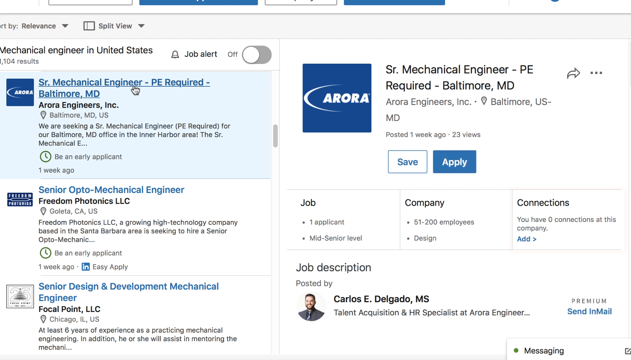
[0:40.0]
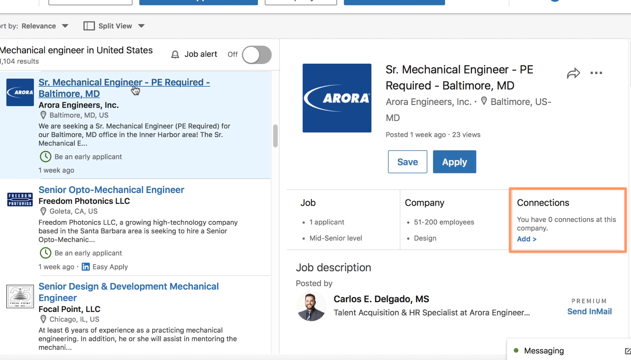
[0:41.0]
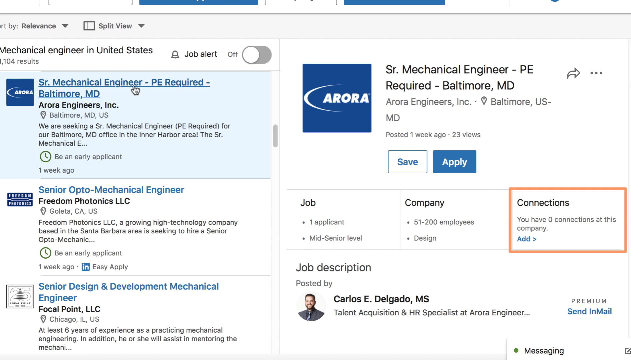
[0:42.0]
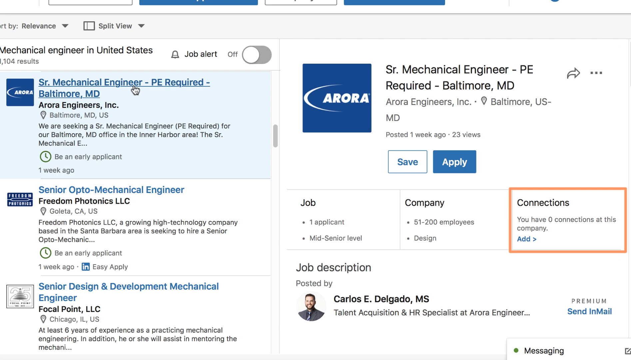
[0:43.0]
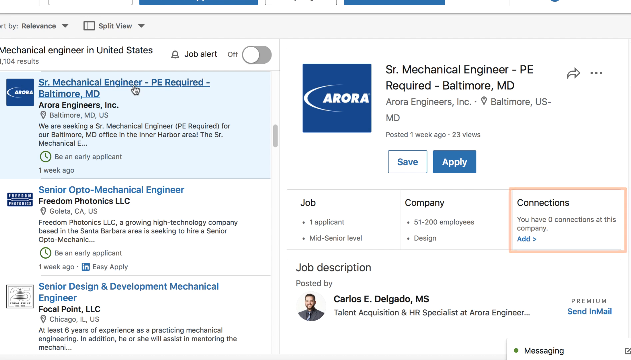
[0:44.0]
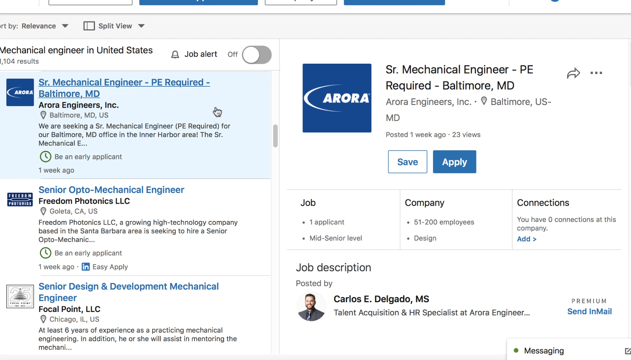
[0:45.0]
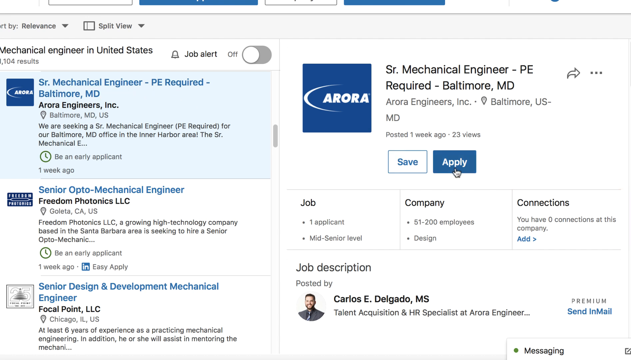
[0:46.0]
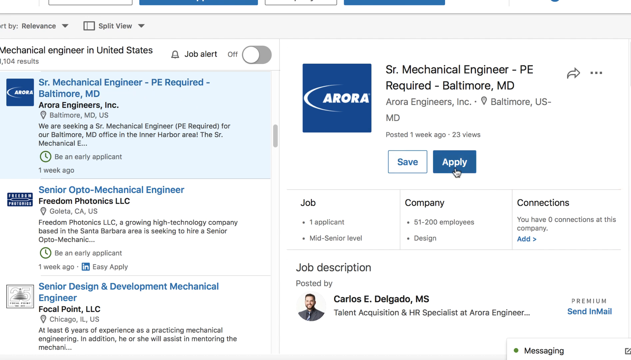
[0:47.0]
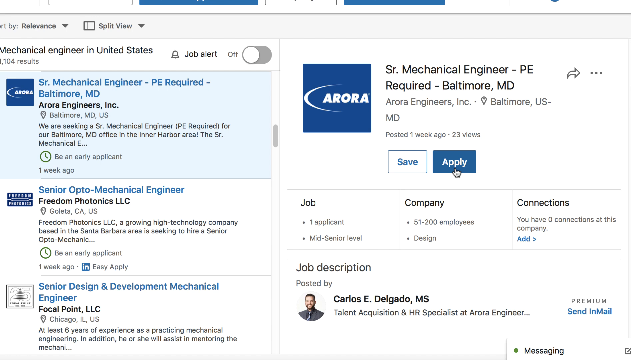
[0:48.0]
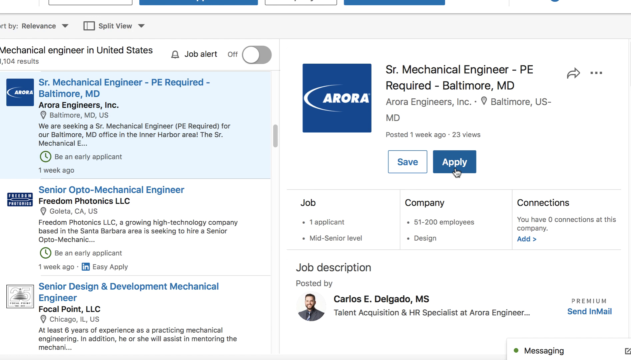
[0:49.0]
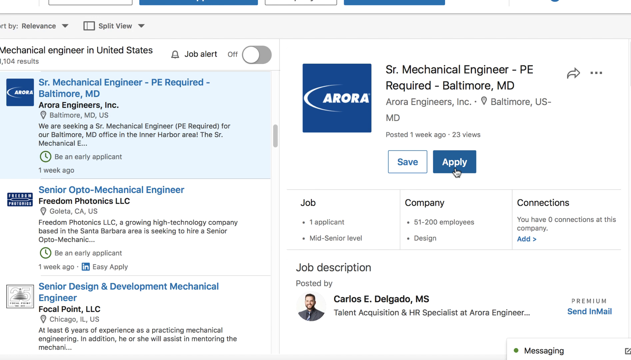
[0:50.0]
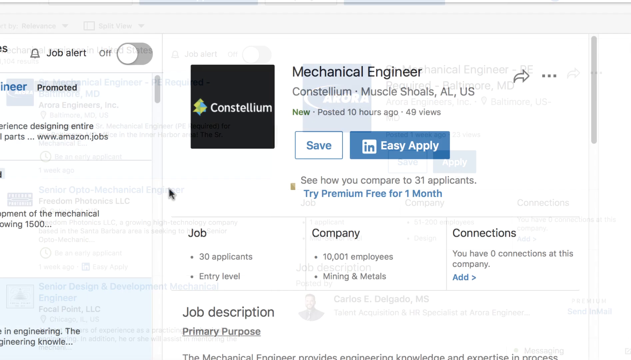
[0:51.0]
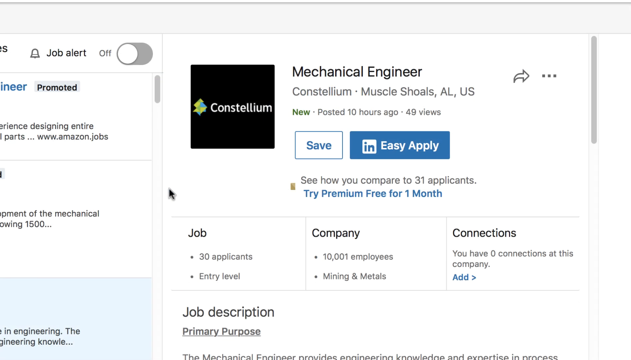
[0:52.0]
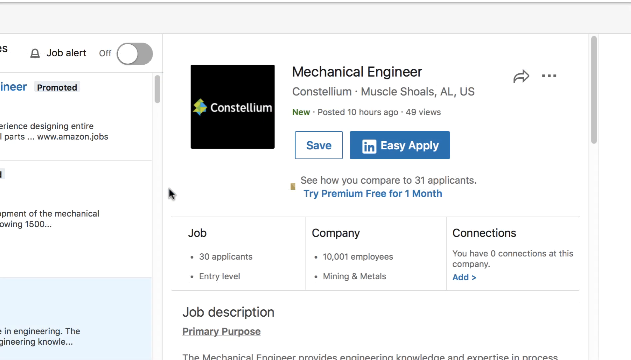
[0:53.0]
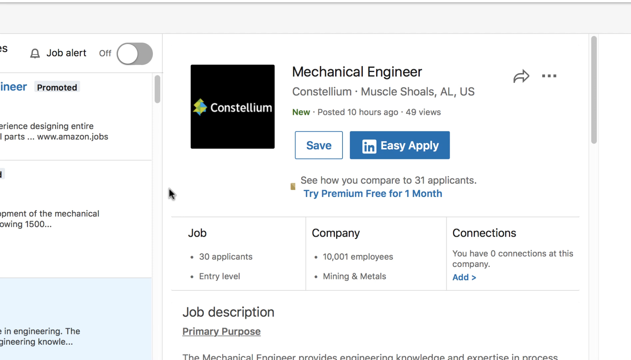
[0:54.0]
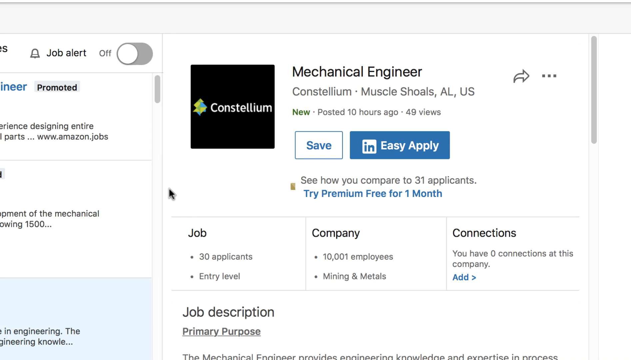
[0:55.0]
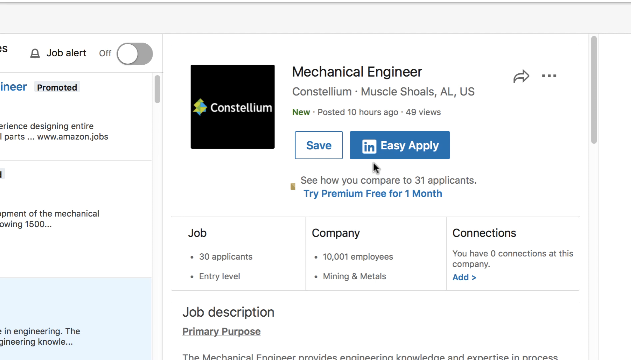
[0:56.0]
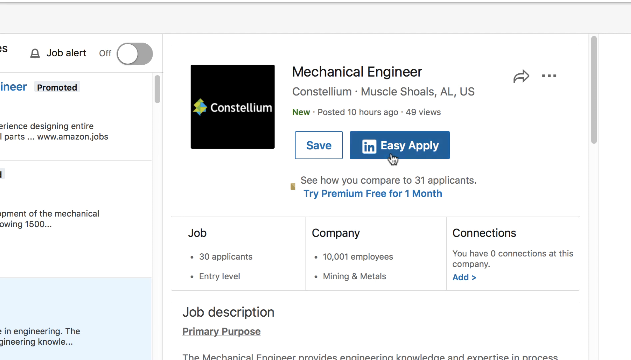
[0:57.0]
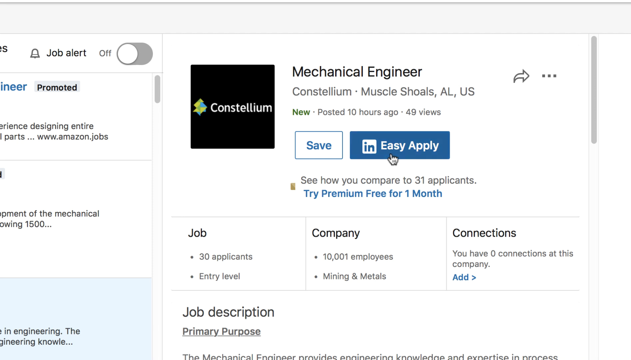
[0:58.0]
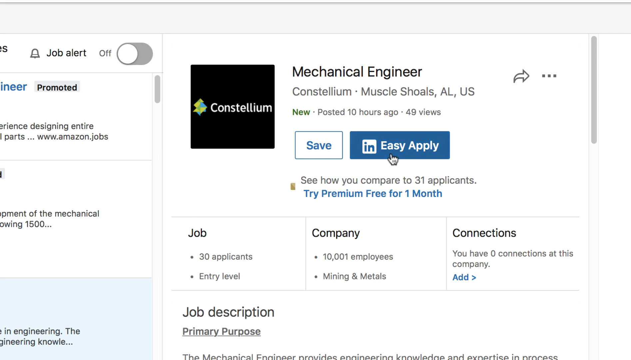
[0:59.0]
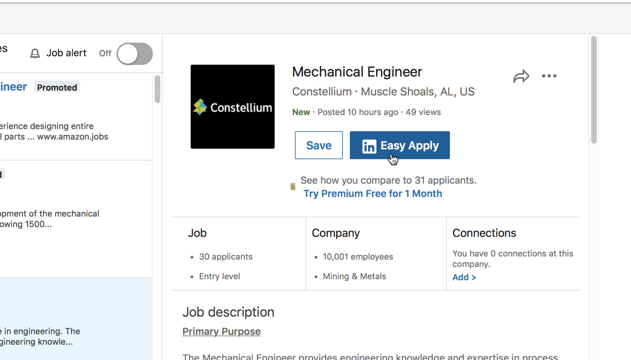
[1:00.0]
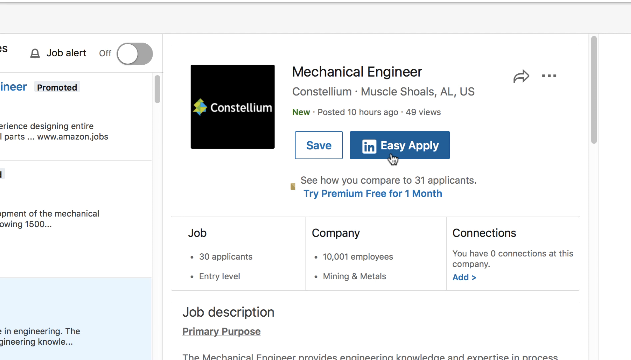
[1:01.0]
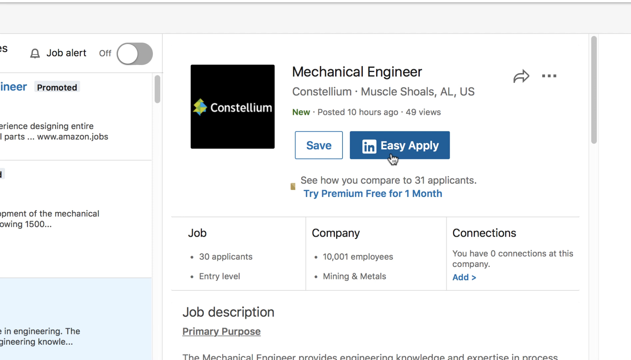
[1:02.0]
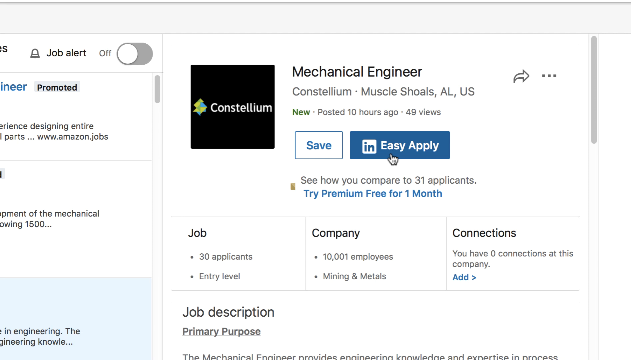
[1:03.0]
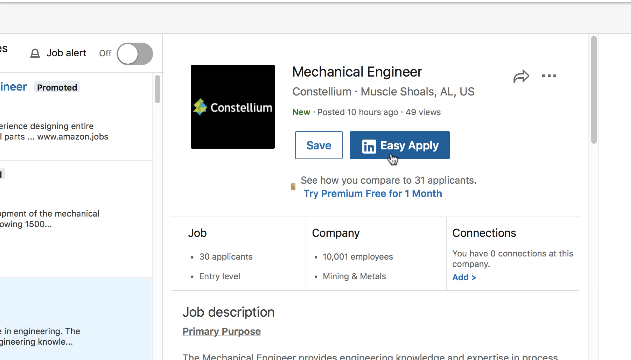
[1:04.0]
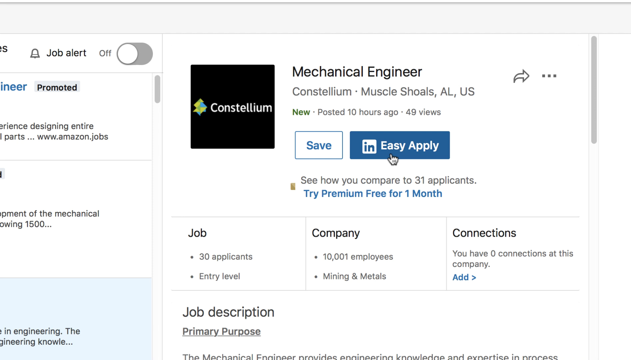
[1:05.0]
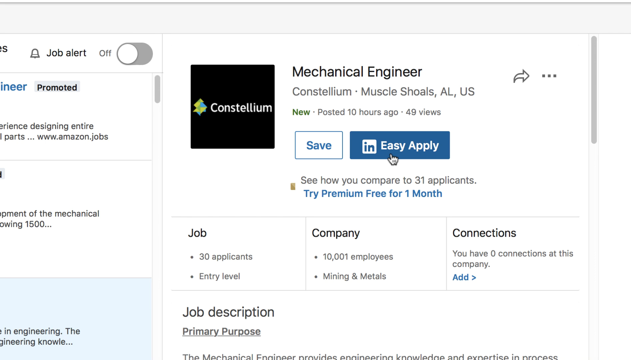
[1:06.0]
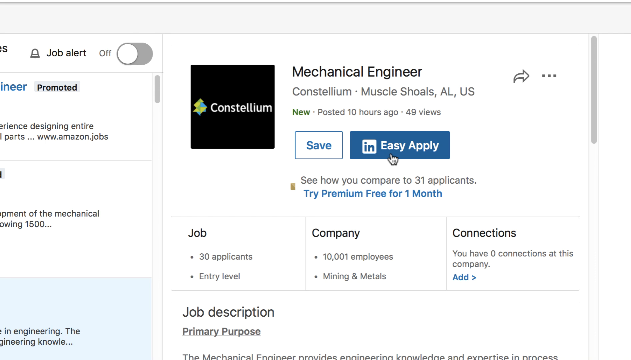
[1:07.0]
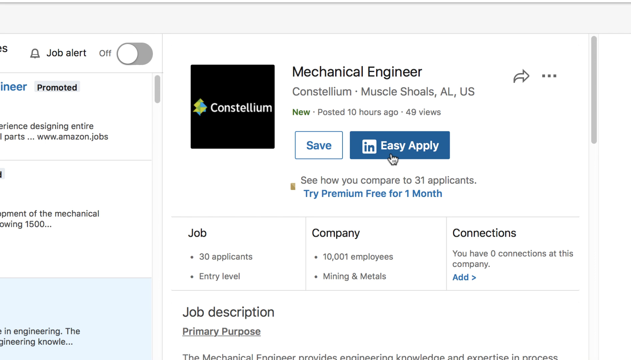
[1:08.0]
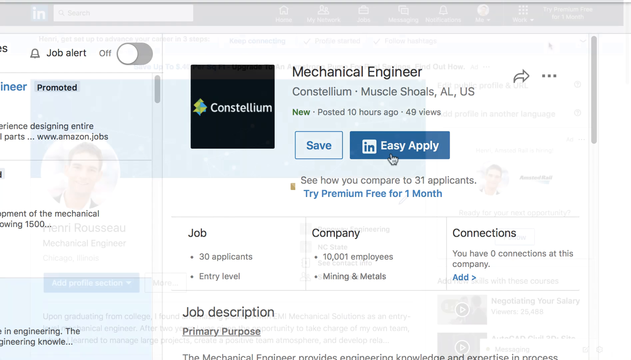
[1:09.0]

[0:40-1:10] The user hovers over the Apply option underneath the Senior Mechanical Engineer job listing. The scene transitions to a different job listing by the company Constellium for Mechanical Engineering. There is an option to save and an Indeed Easy Apply option, which appears to be for premium members since a premium fee is listed. The user hovers over the Easy Apply button. The page then transitions back to the user's main profile picture. While the user is on the Aurora Senior Mechanical Engineer job listing, the connections option is highlighted with an orange rectangle around the word "connections", and below it the words "you have zero connections at this company" and an option to add connections are visible. Constellium is shown to have 10,001 employees and 30 job applicants, and the user has zero connections at this company as well.